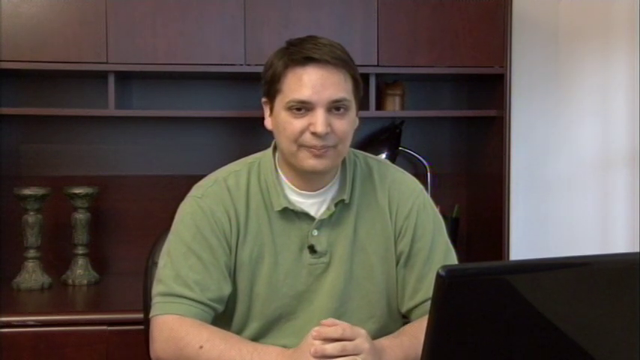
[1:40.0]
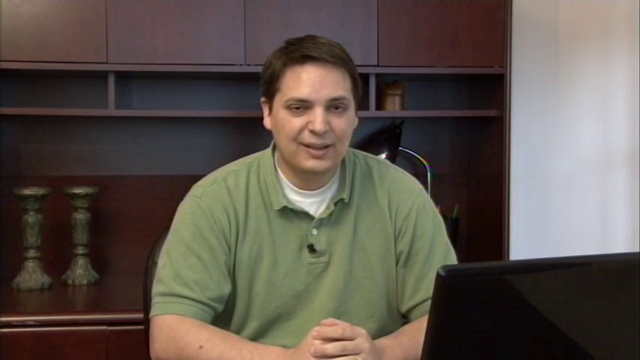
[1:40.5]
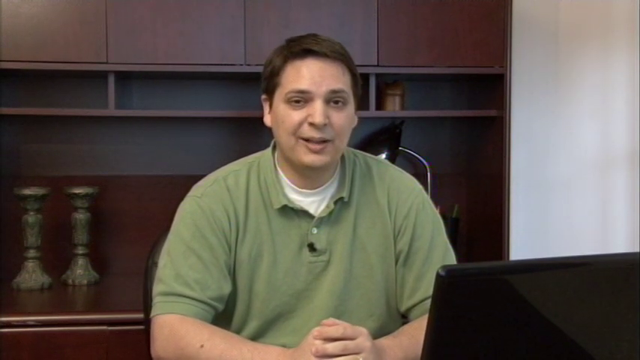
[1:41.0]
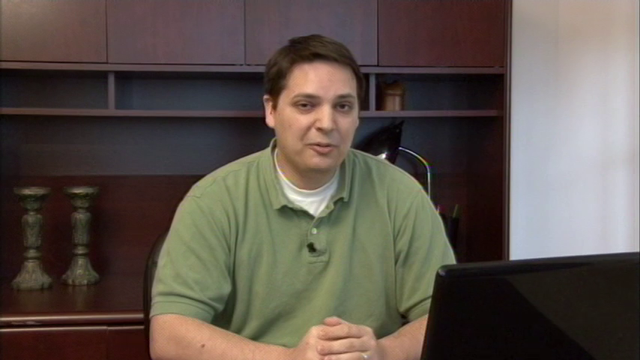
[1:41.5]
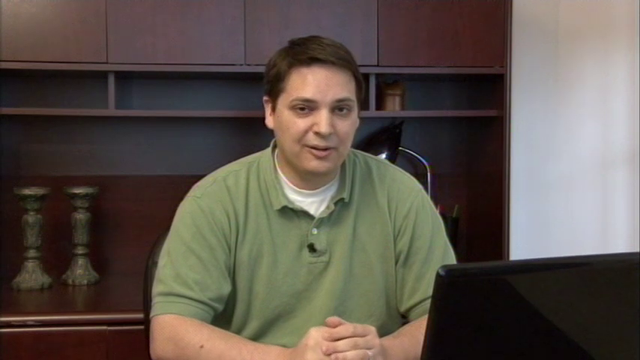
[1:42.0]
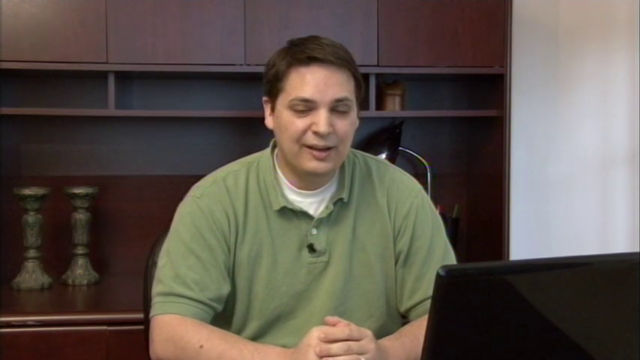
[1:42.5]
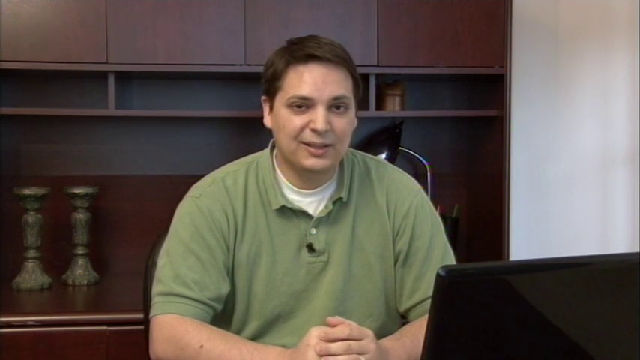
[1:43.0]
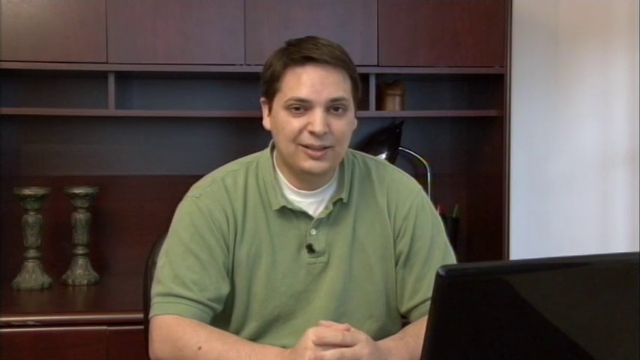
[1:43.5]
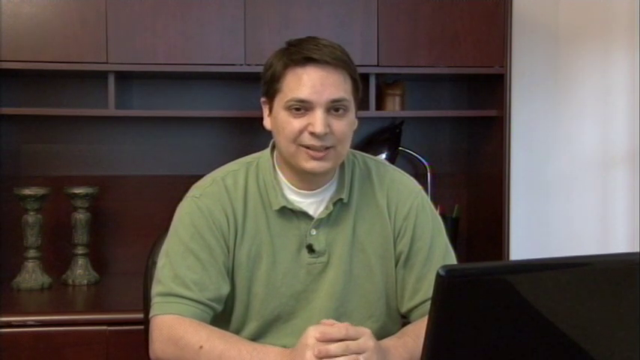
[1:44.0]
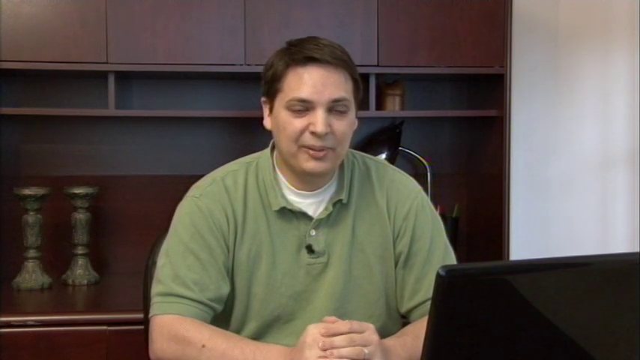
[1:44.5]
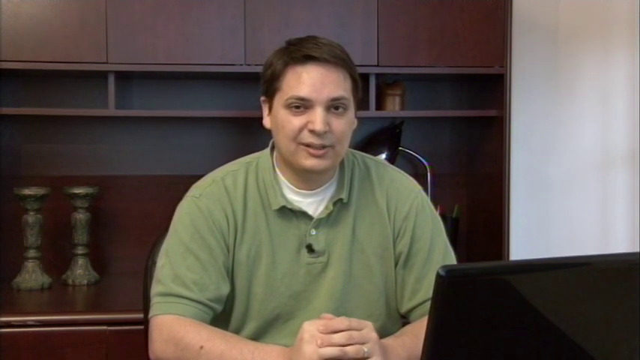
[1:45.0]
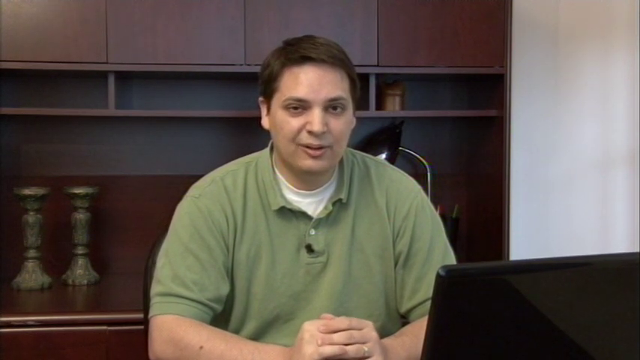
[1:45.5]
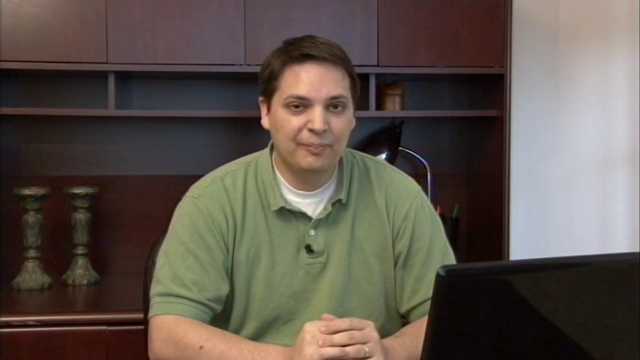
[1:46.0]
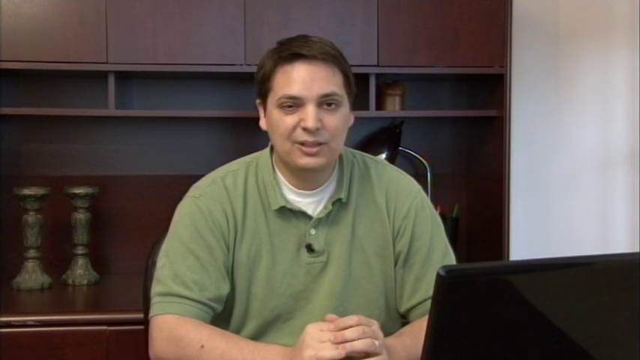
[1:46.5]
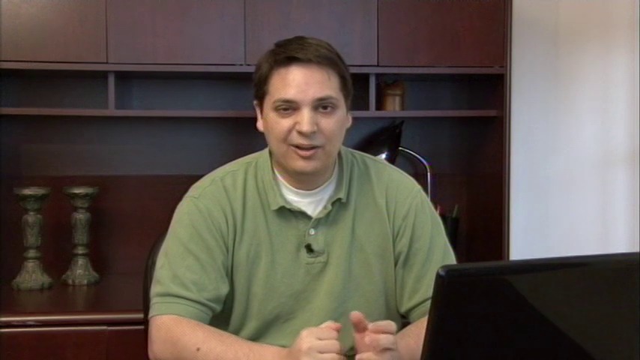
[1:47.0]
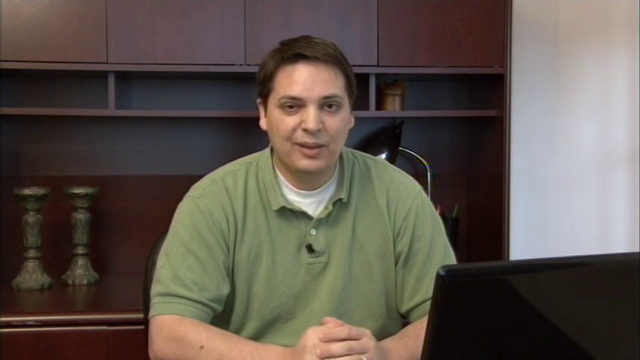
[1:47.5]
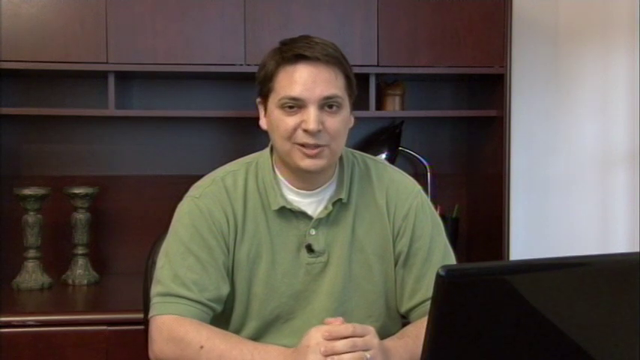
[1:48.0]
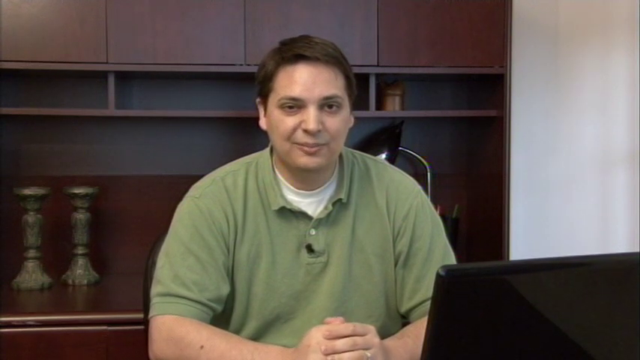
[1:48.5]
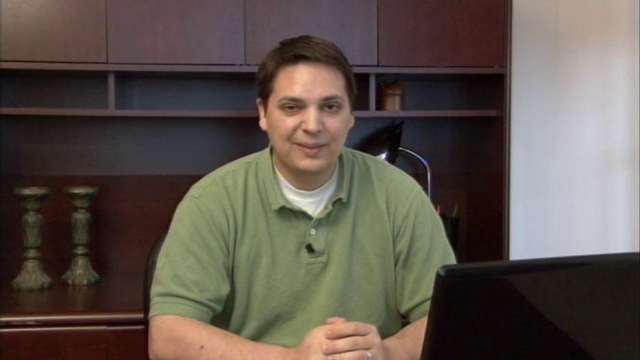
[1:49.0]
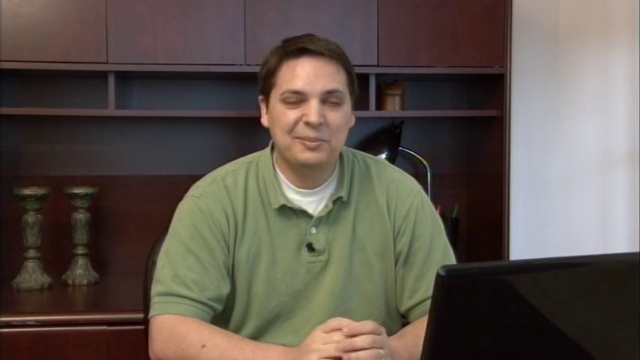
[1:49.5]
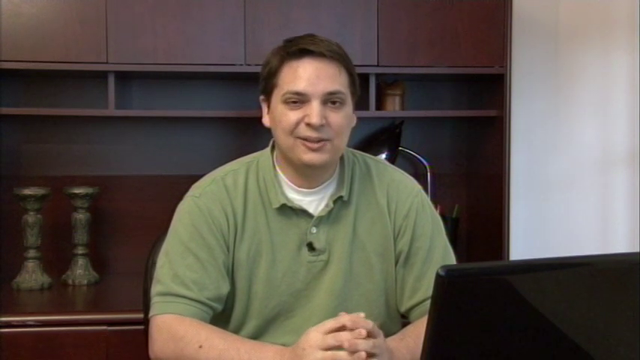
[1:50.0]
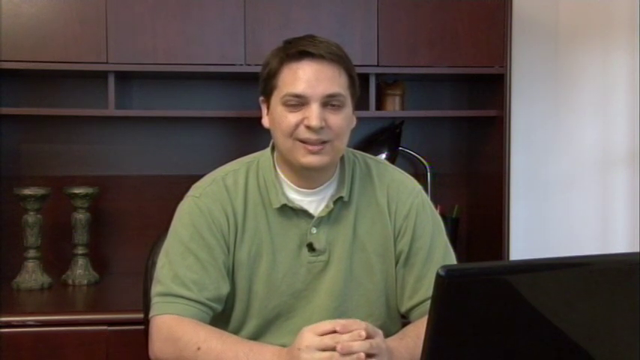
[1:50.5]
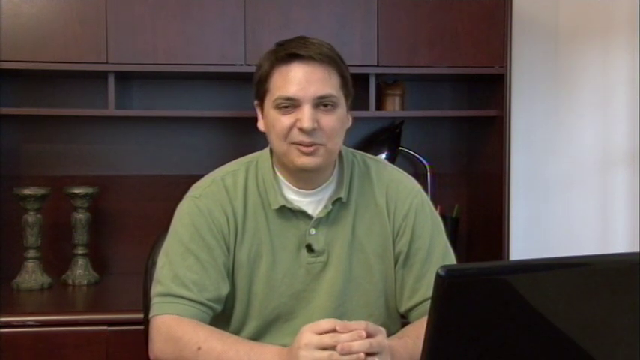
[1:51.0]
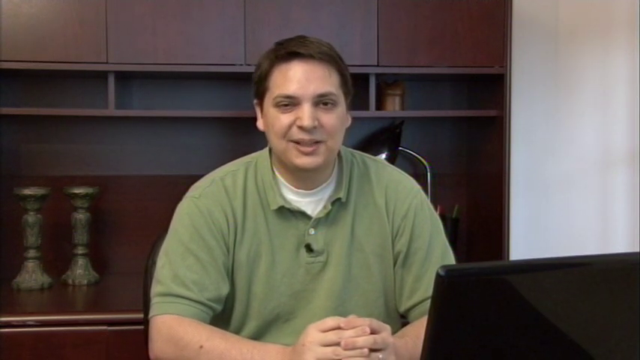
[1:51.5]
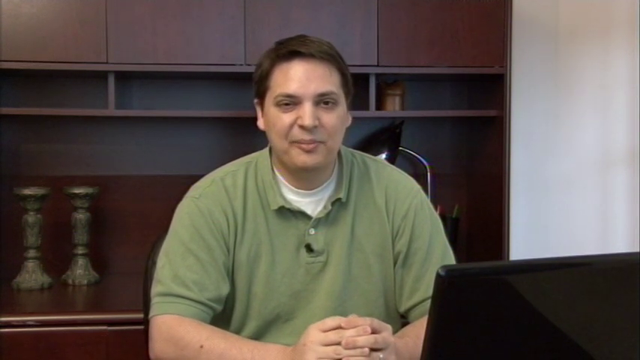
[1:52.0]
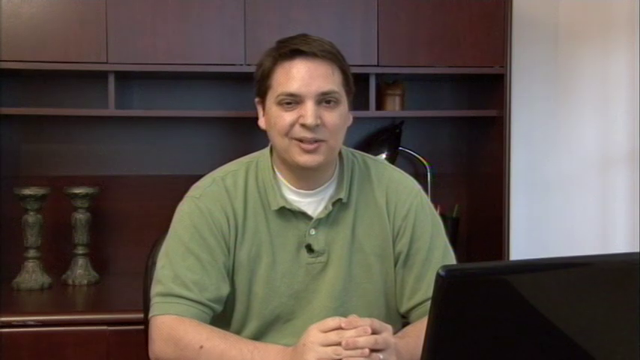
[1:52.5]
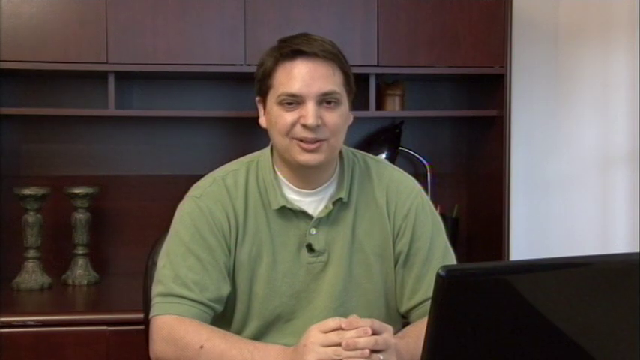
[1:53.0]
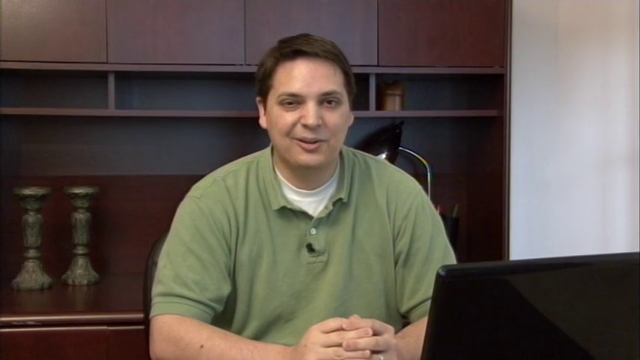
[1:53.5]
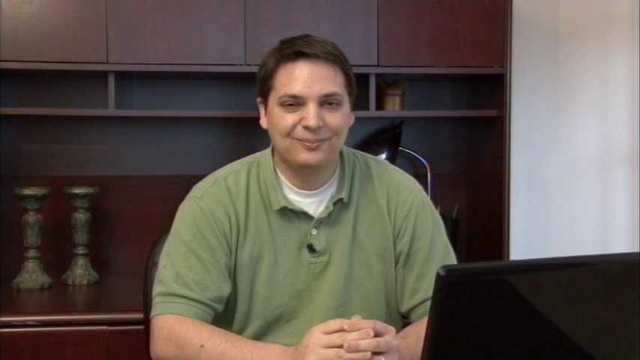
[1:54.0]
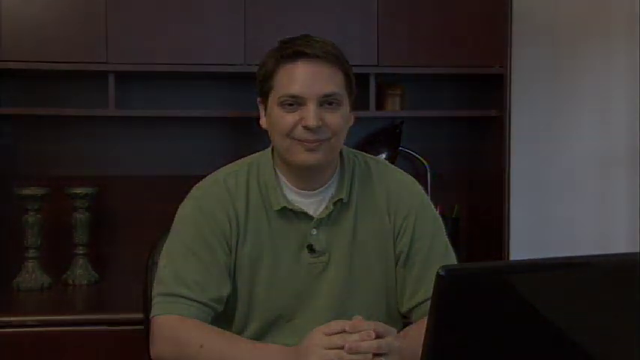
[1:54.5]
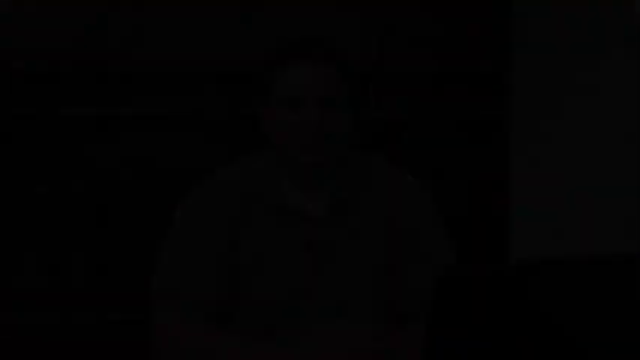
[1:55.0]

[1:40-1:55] The man continues speaking directly to the camera with a slight smile. His hands appear to be resting on the table in front of him, making slight movements as he speaks but no particular gestures. He appears to be summarizing the video as some kind of outro. He continues speaking and smiling, then appears to give a somewhat larger smile than before. As he finishes, his image and the rest of the display fade into black, ending the video.